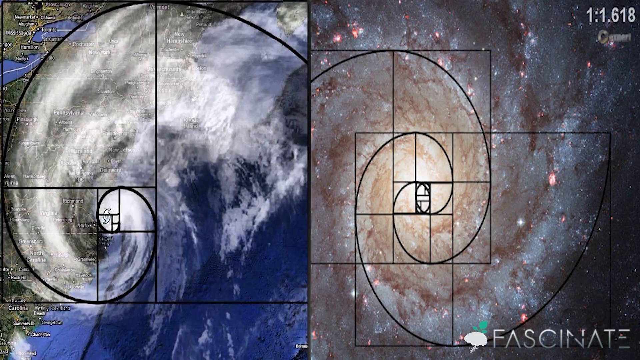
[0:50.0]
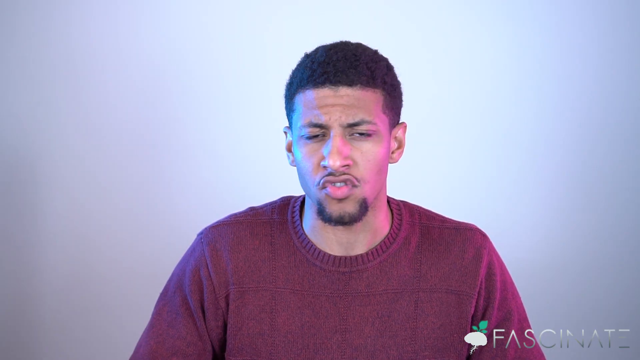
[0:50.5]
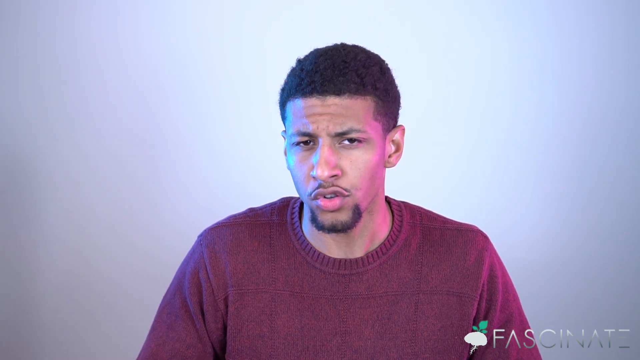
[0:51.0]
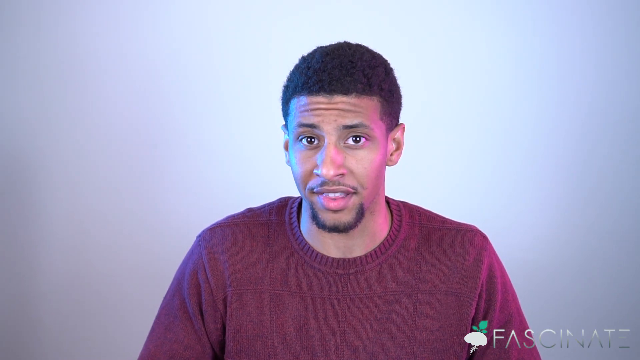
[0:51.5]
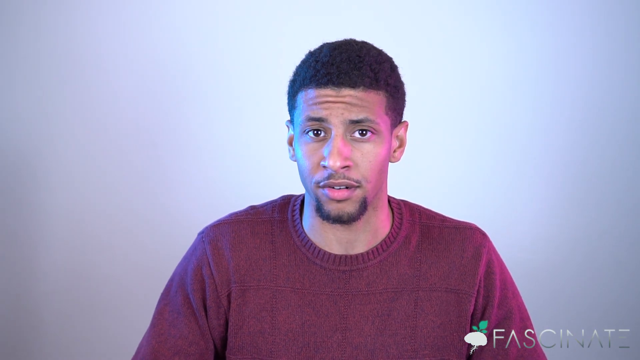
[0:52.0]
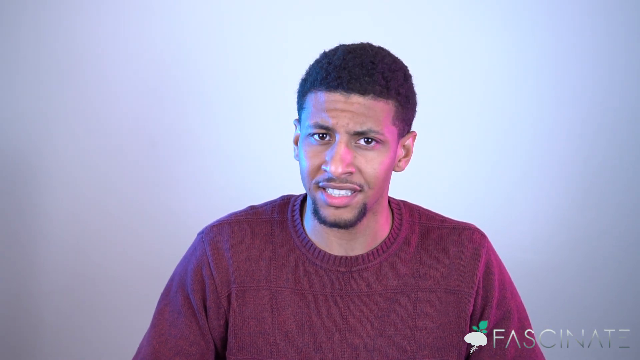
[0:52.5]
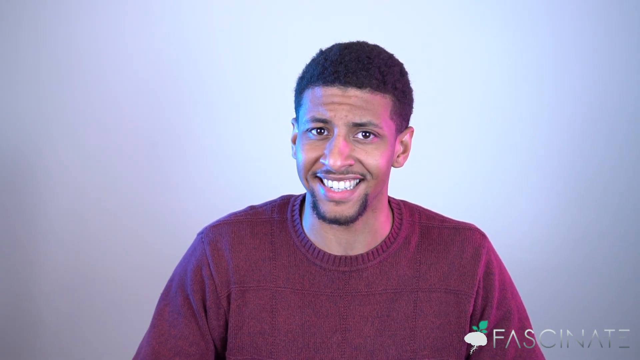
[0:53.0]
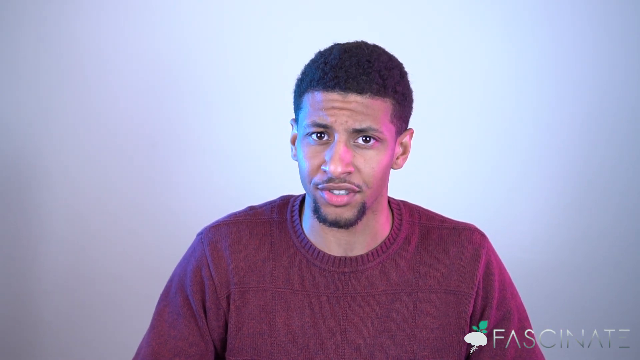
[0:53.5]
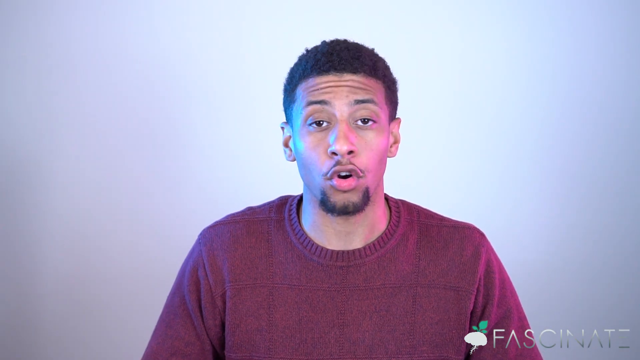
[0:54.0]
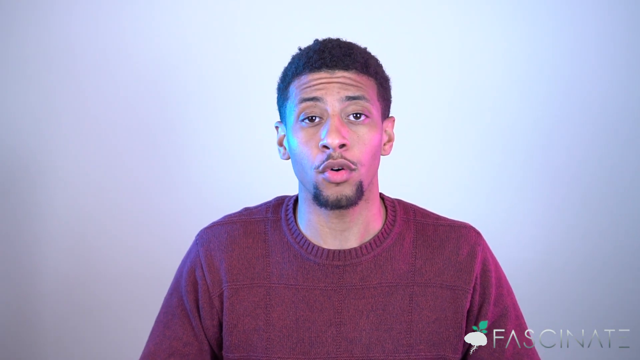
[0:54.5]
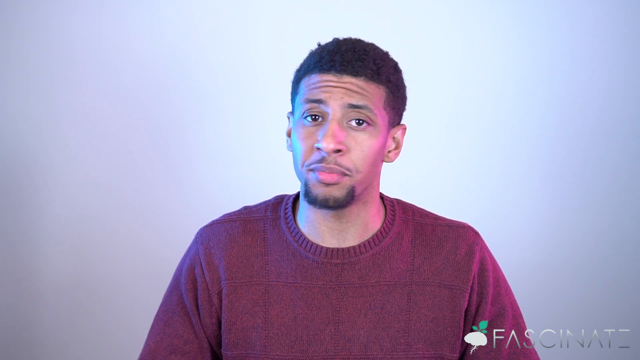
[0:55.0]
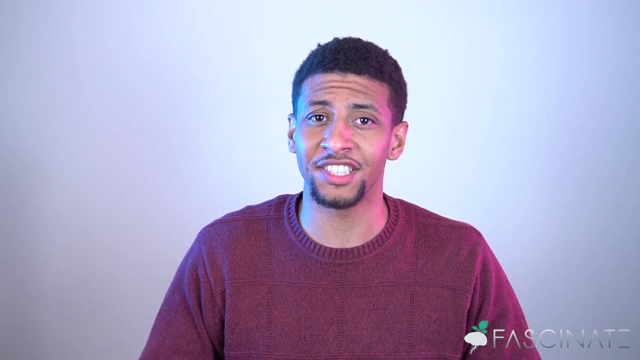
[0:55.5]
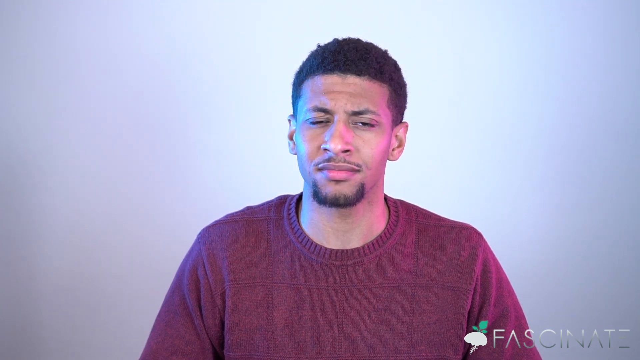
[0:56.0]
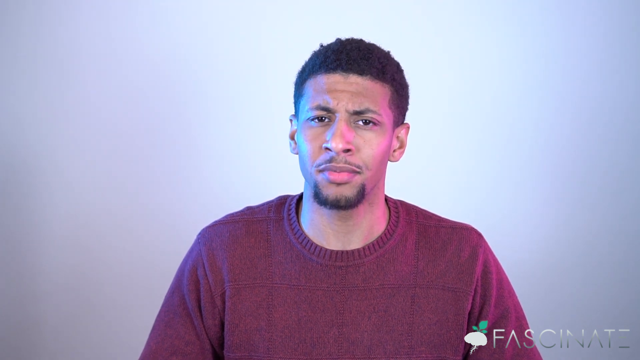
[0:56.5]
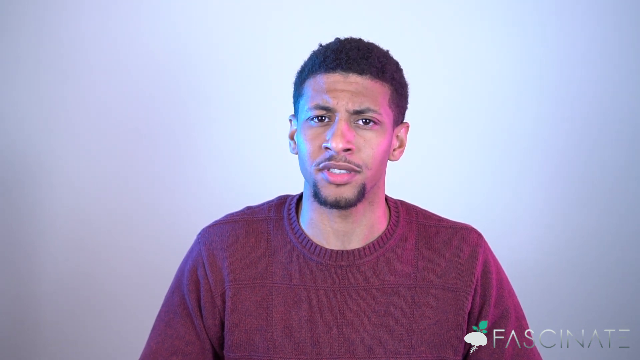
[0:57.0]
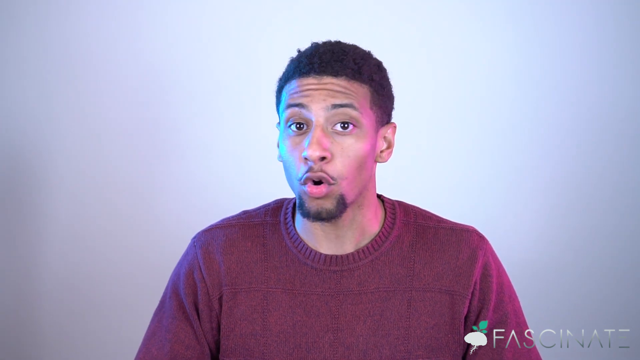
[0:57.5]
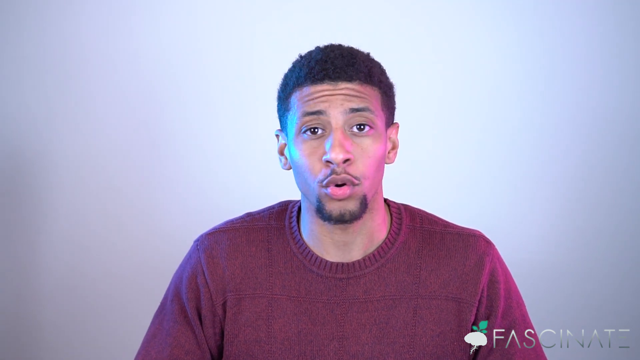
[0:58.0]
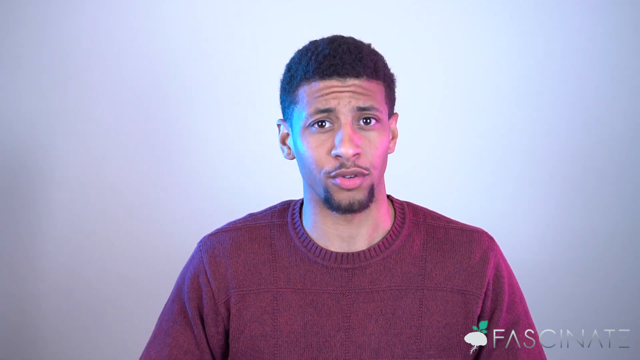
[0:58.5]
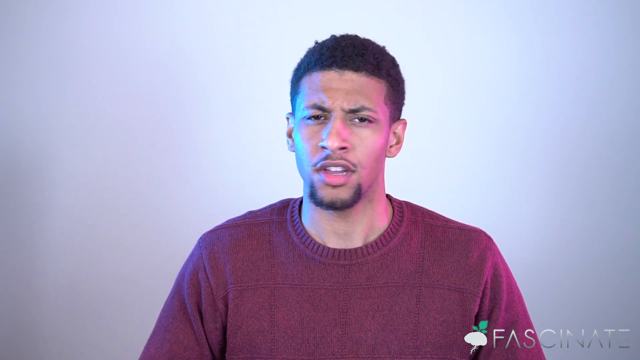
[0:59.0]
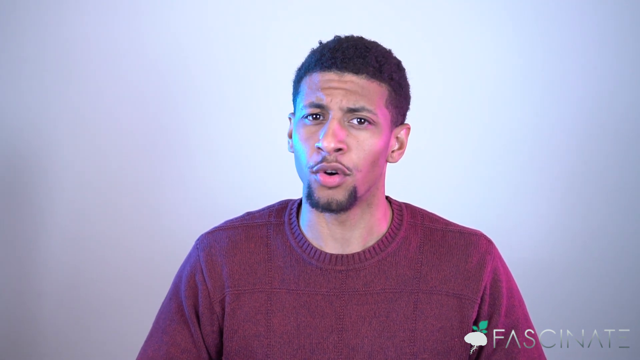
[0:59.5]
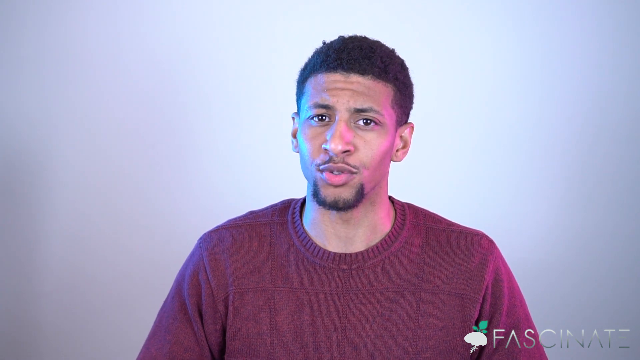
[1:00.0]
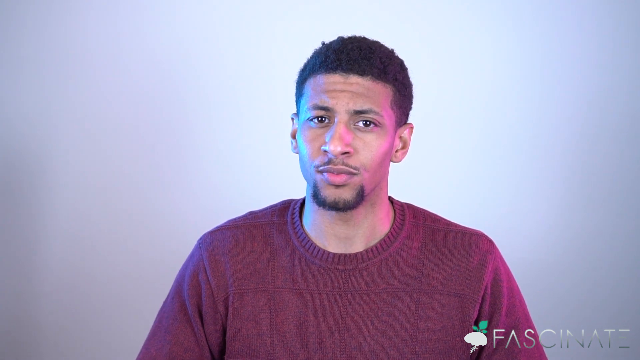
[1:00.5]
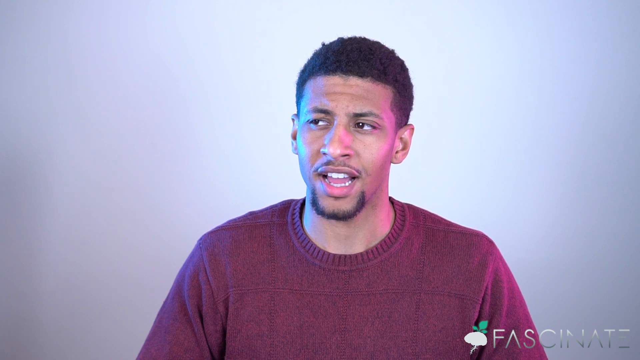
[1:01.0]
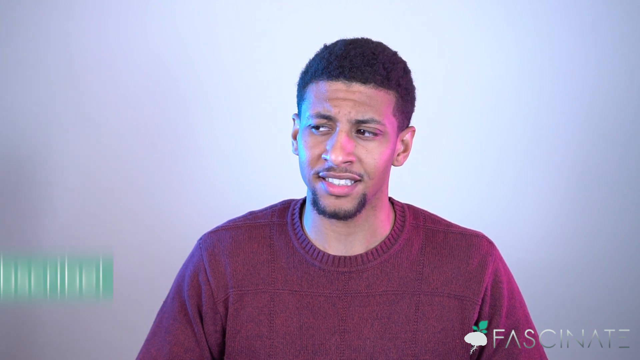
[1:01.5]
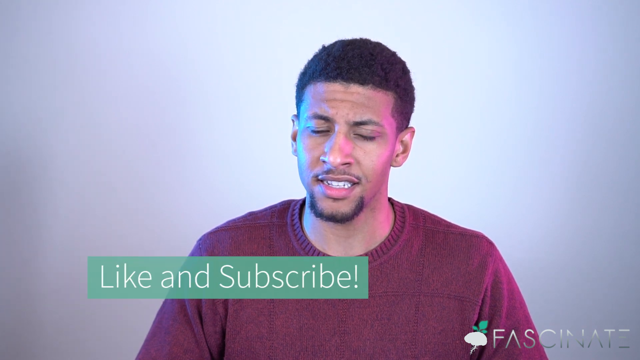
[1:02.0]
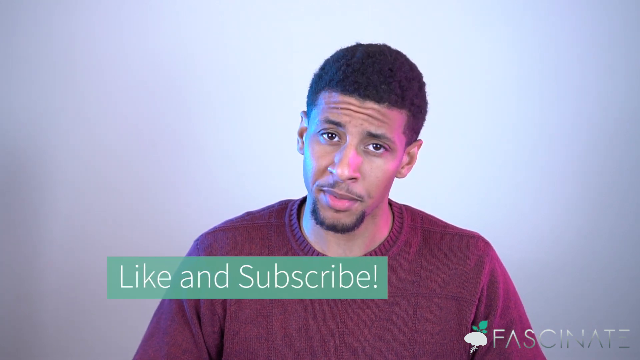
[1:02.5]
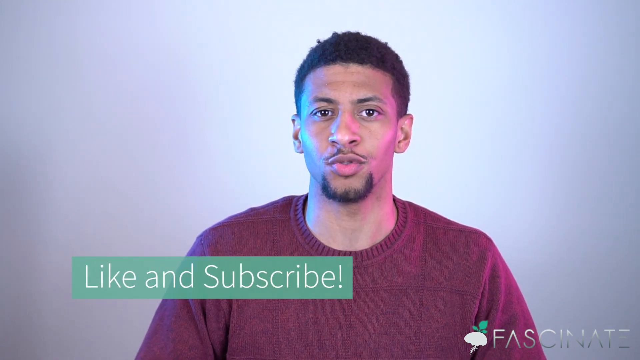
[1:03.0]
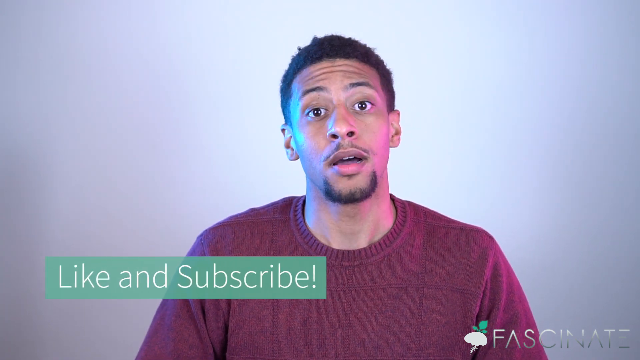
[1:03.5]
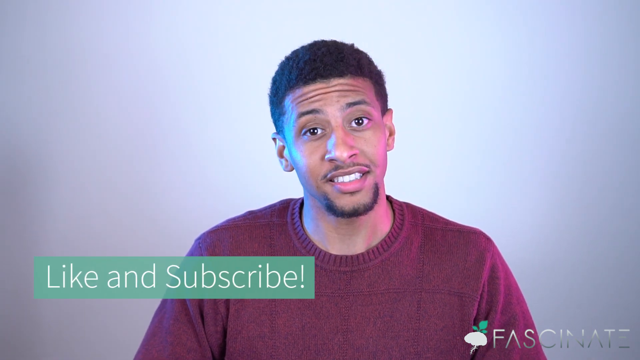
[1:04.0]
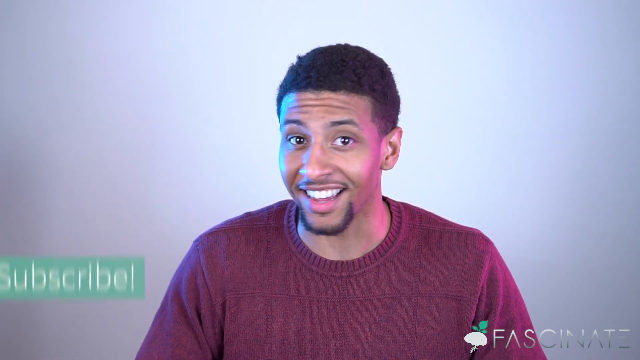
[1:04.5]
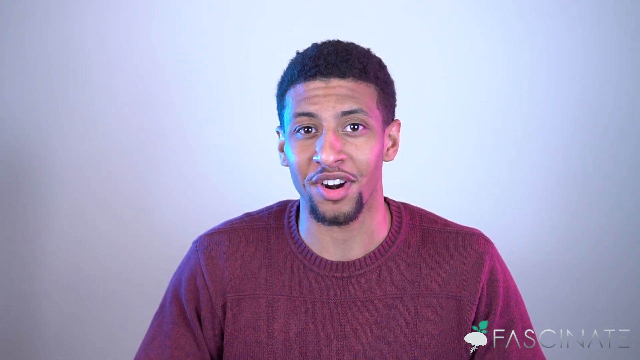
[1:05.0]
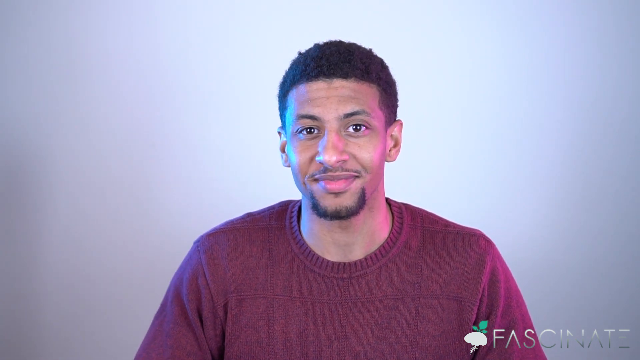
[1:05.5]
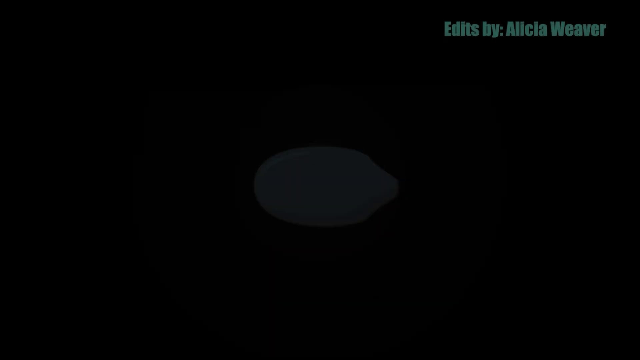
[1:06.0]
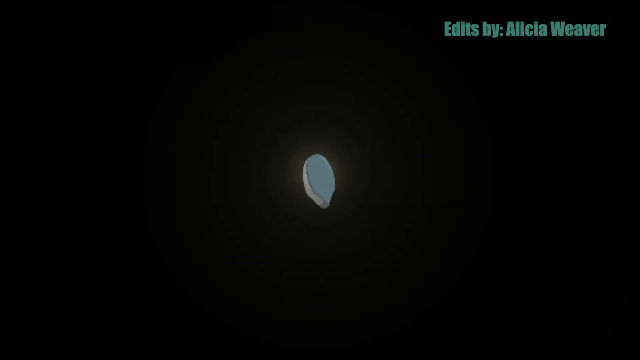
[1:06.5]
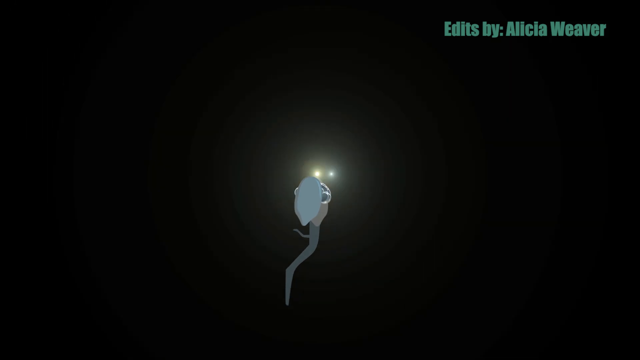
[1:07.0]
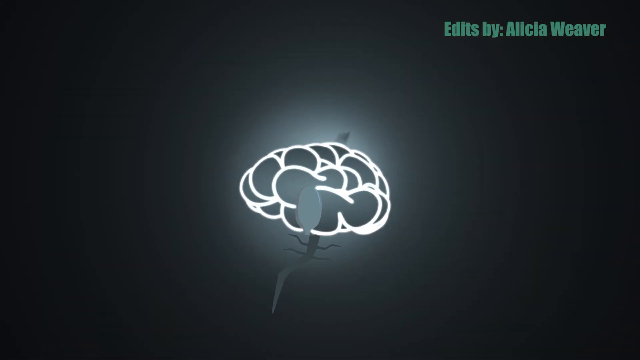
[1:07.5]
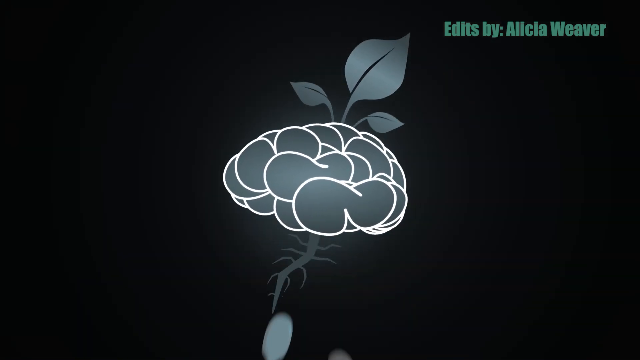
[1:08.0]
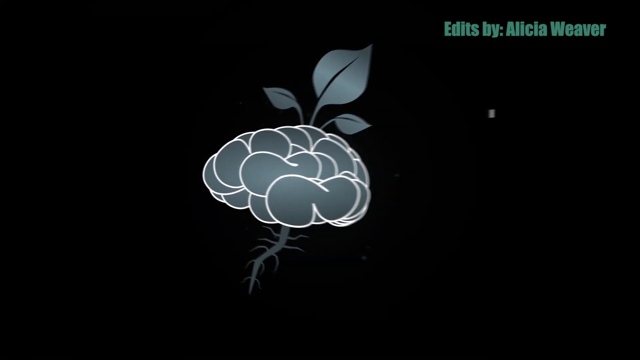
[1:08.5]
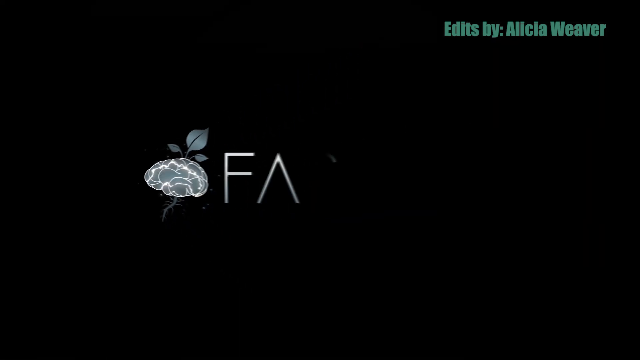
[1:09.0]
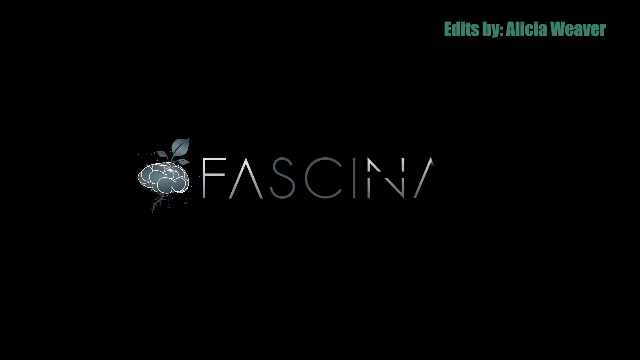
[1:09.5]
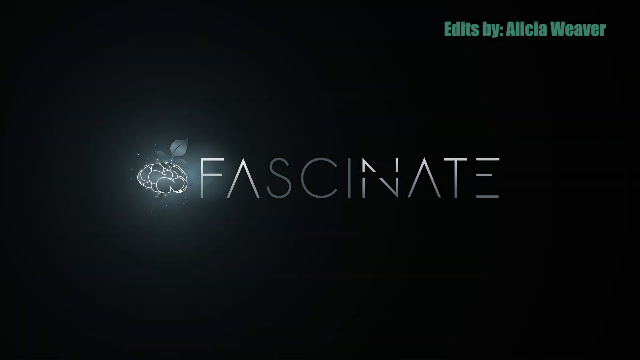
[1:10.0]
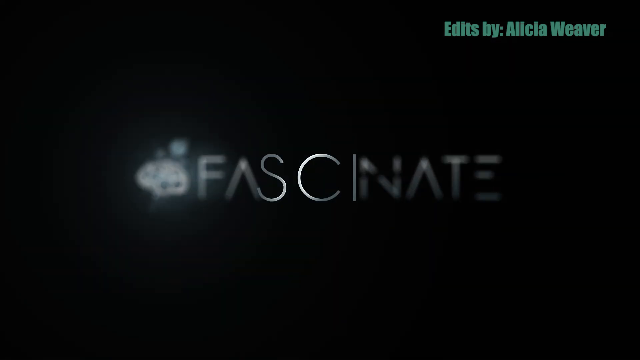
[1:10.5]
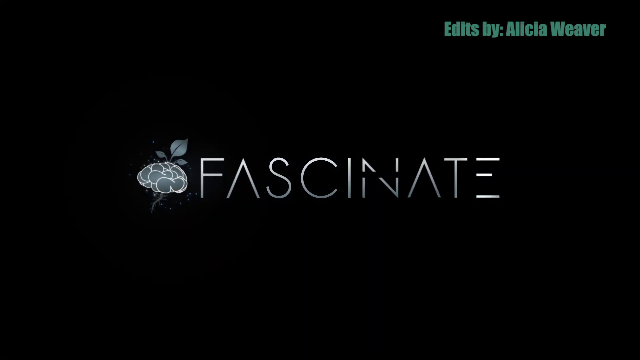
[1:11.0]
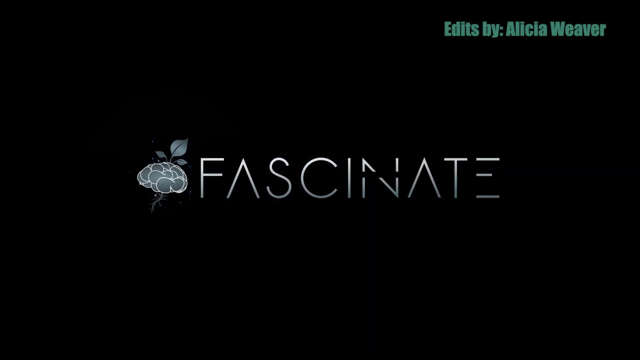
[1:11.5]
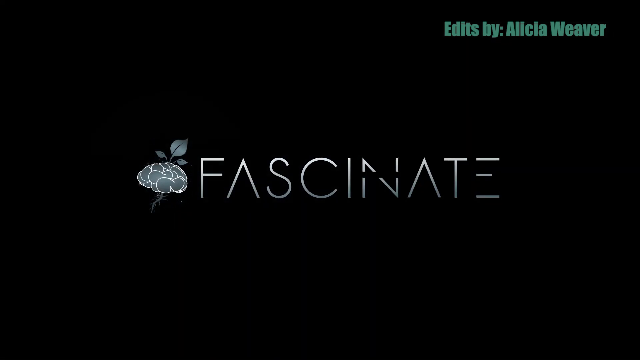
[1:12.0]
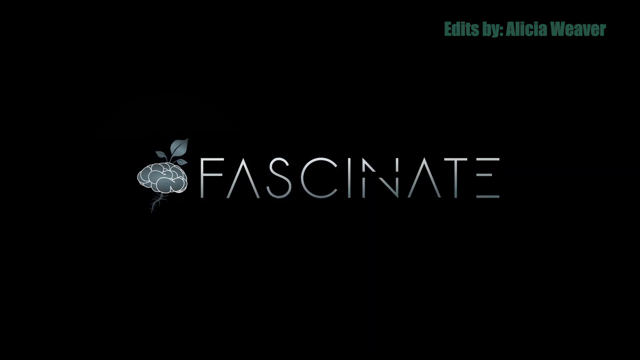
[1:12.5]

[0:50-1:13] The man is shown speaking, seemingly nodding and very animated in his movements, as if to make a point. His eyes roll to the side, and then a "Like and Subscribe" text box appears, which, like the others, oscillates side to side before disappearing off the side of the screen. Next comes a black background with "Edits by: Alicia Weaver" in the top right. What looks to be an animation shows a small root growing into a brain, with the roots below and flowers coming out of the top. This animates into the logo for Fascinate: the brain/root graphic becomes the Fascinate logo icon with the "Fascinate" text to the right of it, and the "SCI" in "fascinate" briefly appears bigger, jumping out, as if indicating that science is part of the logo.